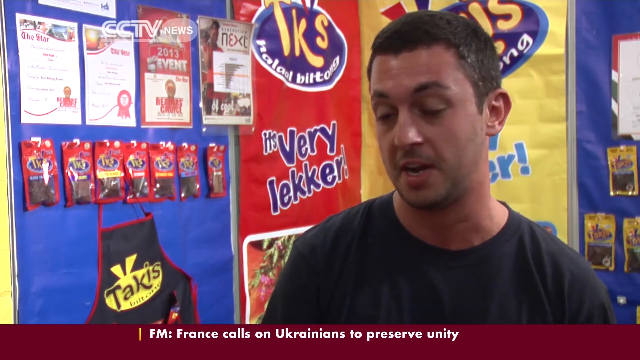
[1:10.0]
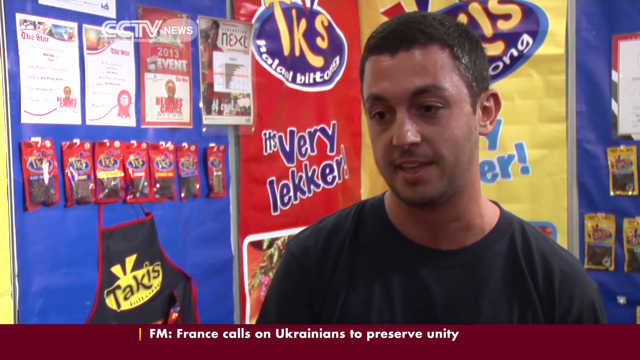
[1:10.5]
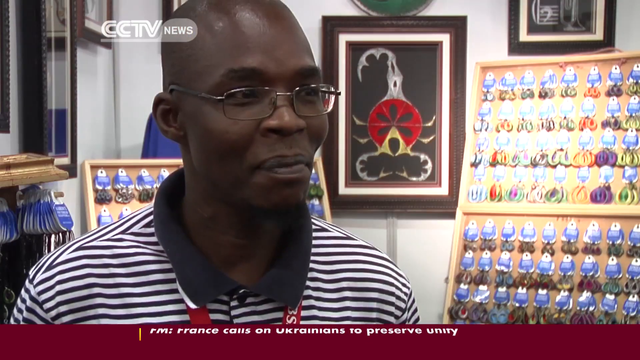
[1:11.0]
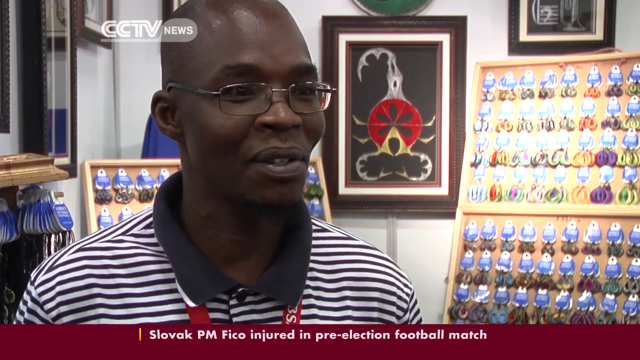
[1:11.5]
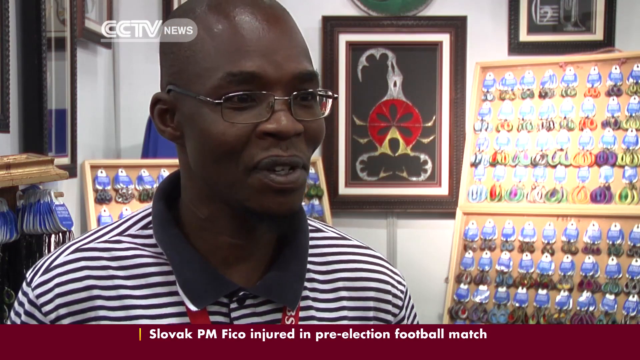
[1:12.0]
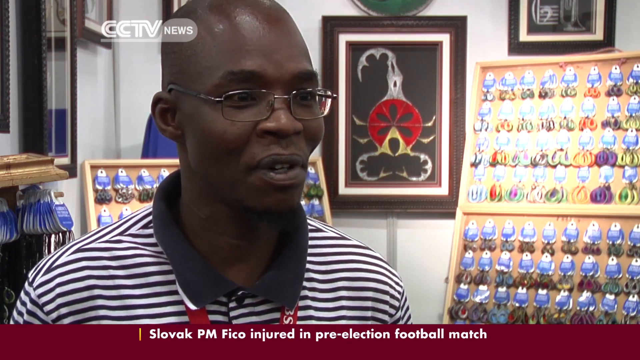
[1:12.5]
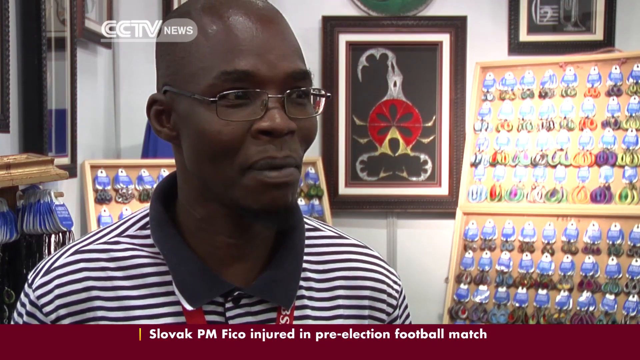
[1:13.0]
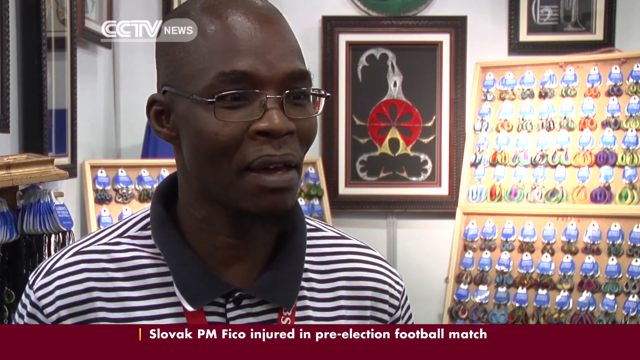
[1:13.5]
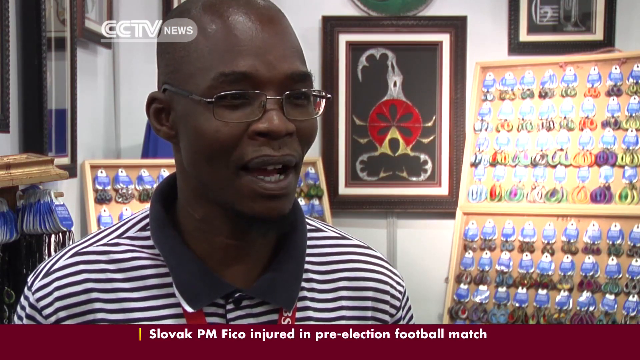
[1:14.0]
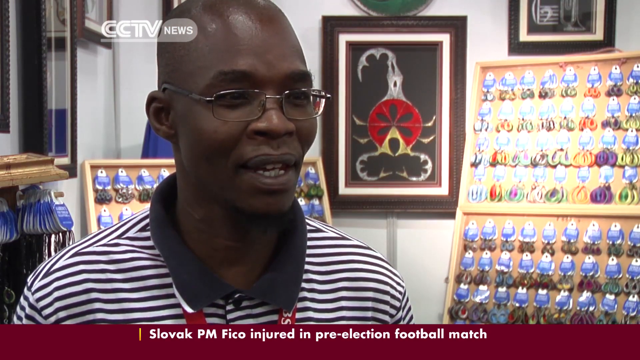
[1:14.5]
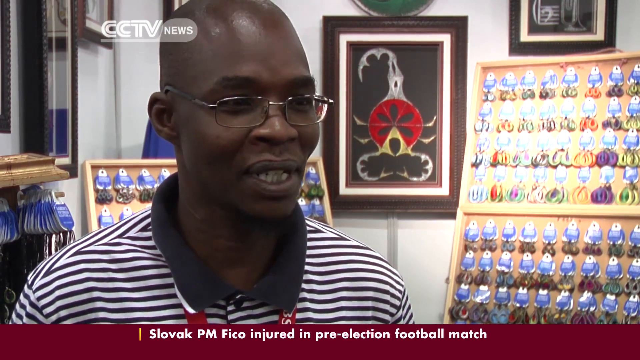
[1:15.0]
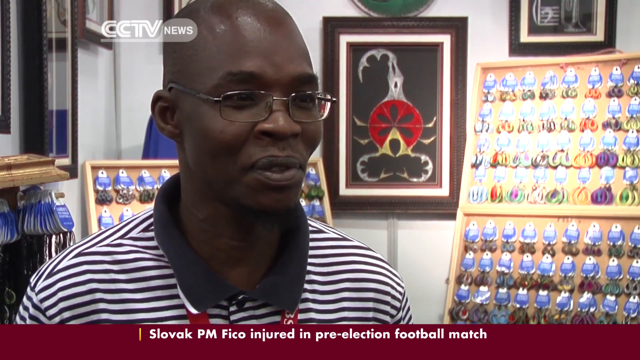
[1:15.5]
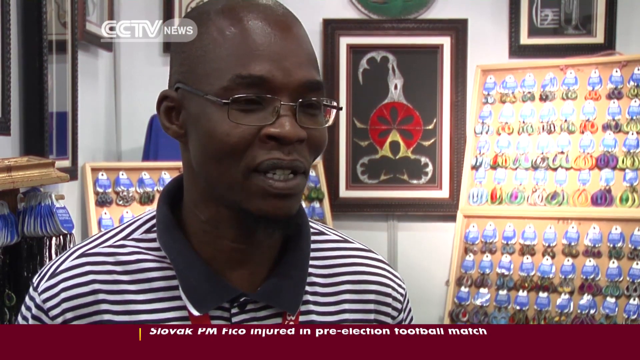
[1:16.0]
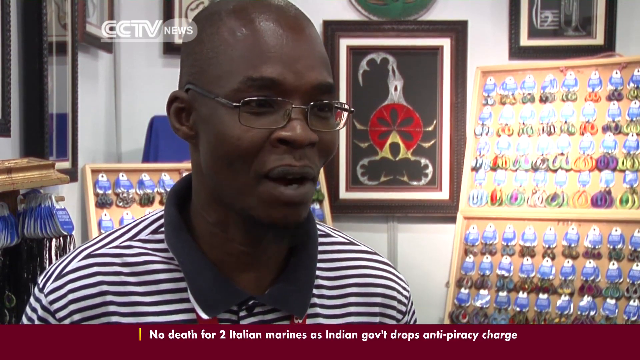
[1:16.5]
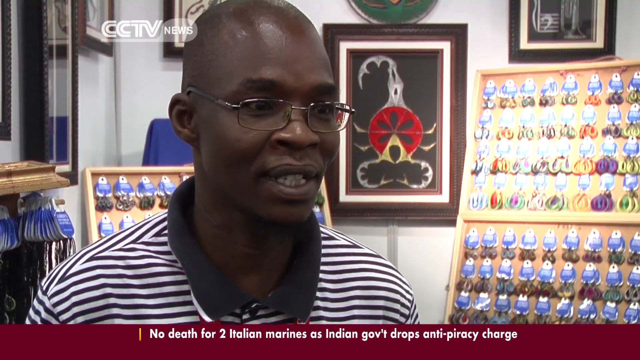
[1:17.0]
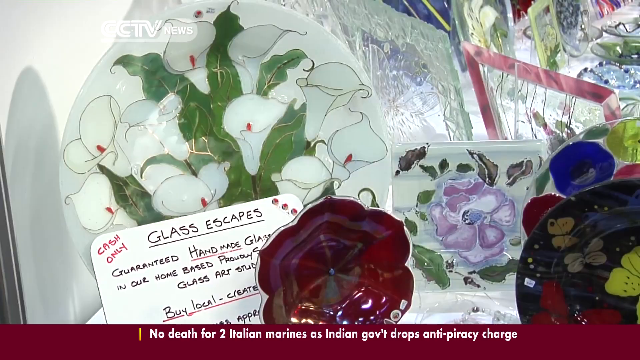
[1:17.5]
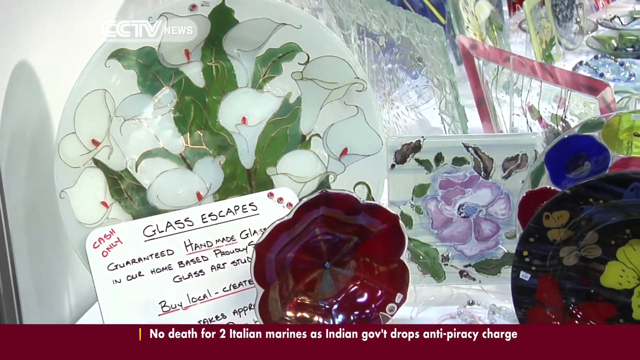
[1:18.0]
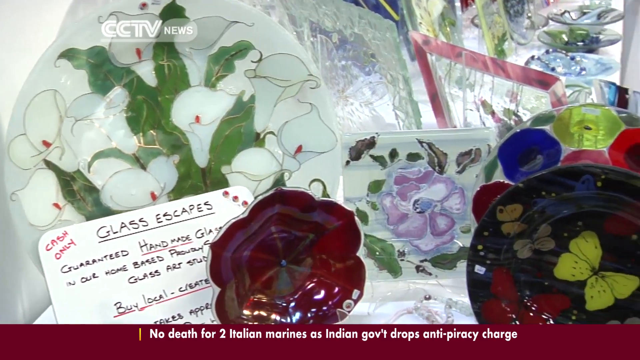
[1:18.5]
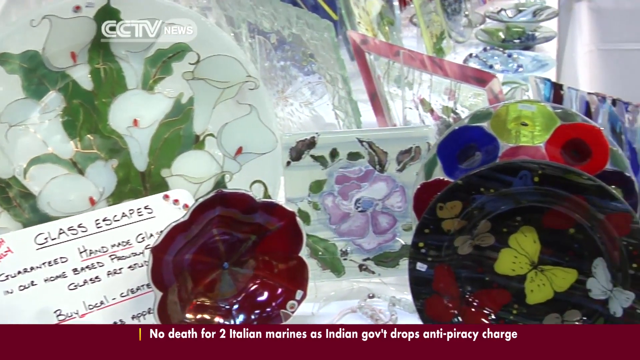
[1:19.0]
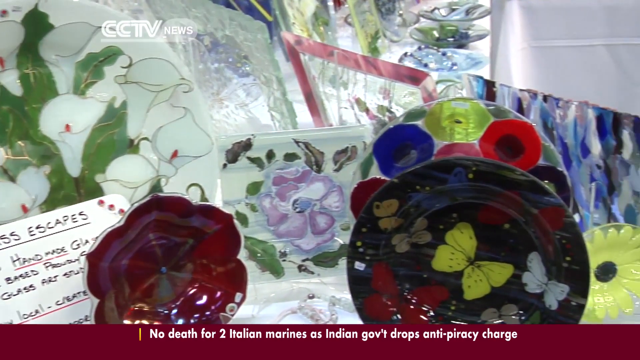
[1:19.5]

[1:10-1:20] Another man, also wearing glasses, appears beside a white and blue structure; it is unclear what he is selling, possibly air fresheners. Glass products are then shown, with text reading "glass escapes cash only." The report is from CCTV News.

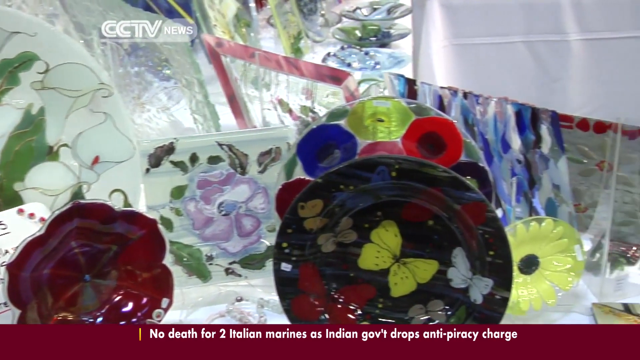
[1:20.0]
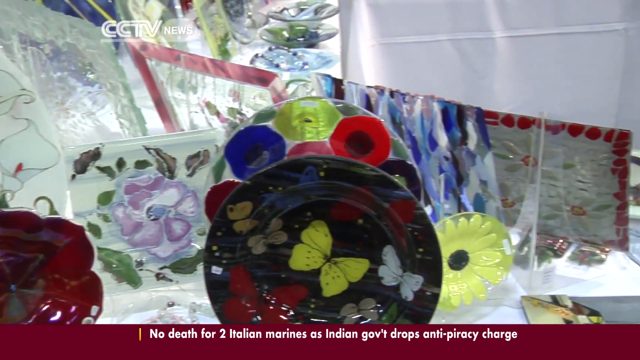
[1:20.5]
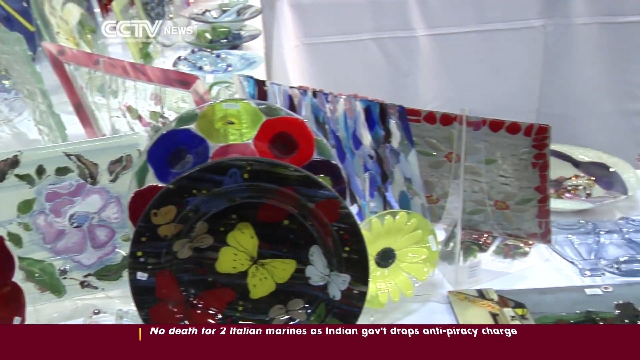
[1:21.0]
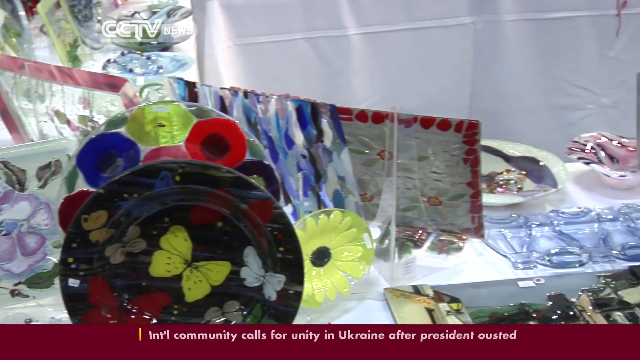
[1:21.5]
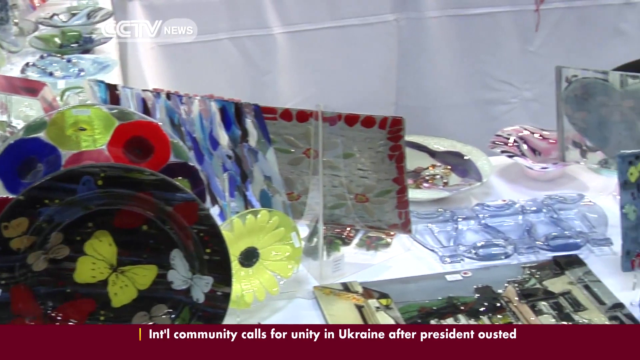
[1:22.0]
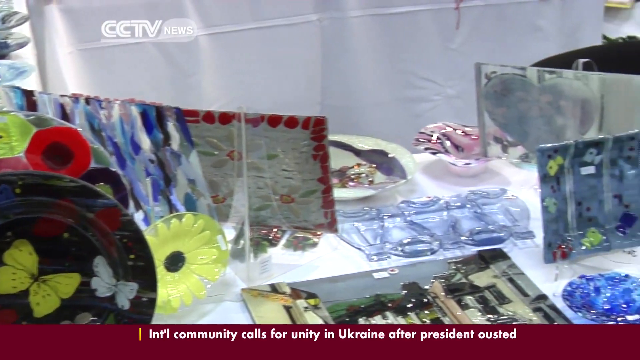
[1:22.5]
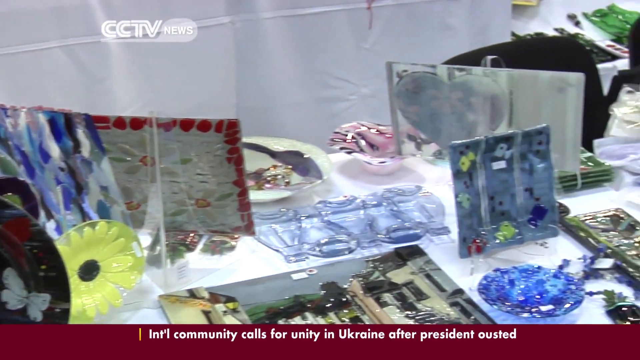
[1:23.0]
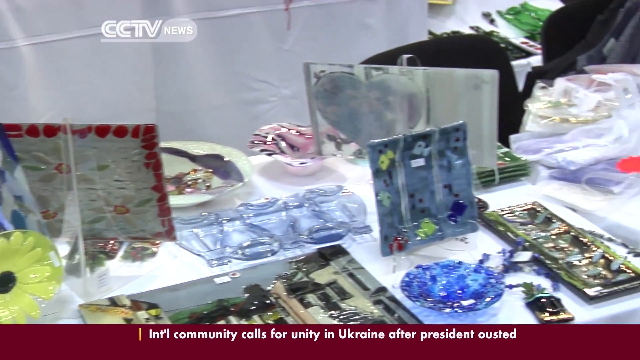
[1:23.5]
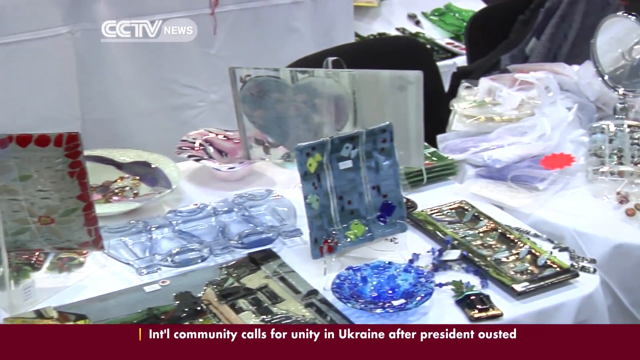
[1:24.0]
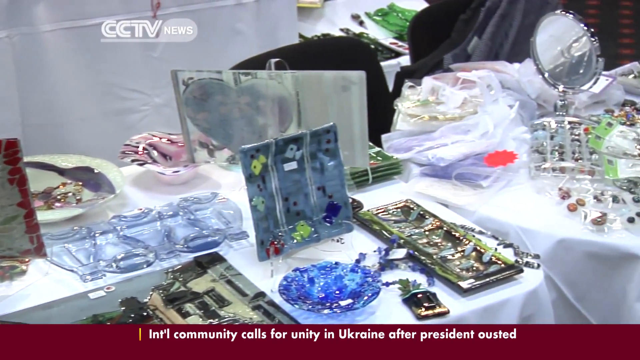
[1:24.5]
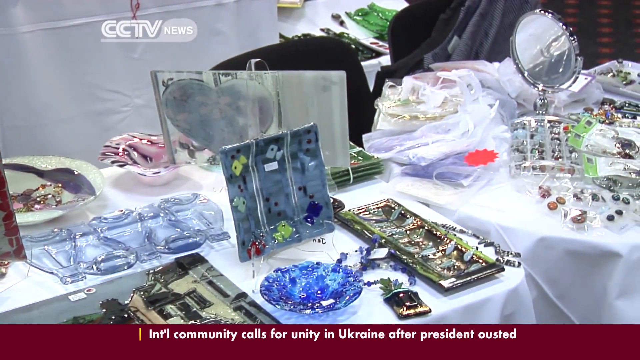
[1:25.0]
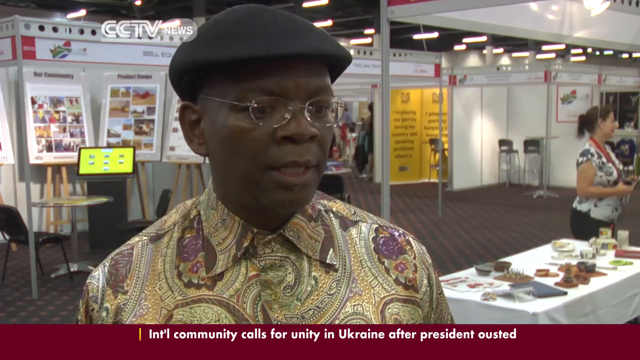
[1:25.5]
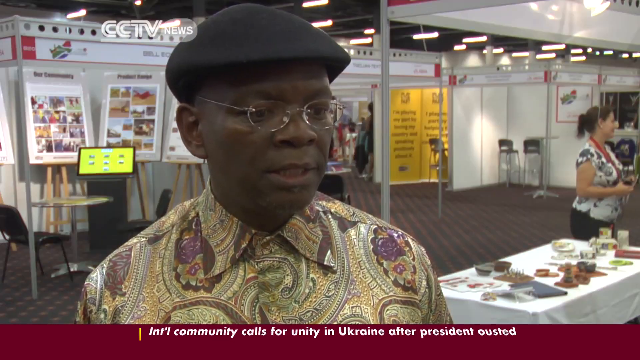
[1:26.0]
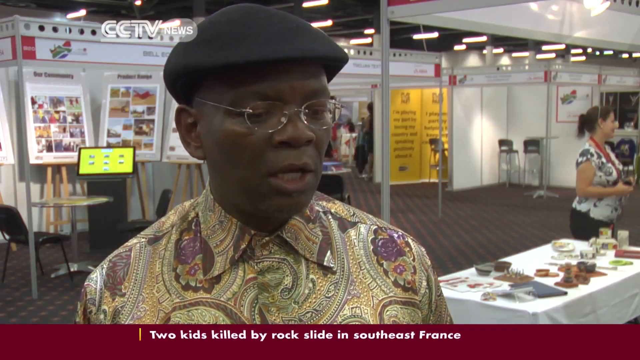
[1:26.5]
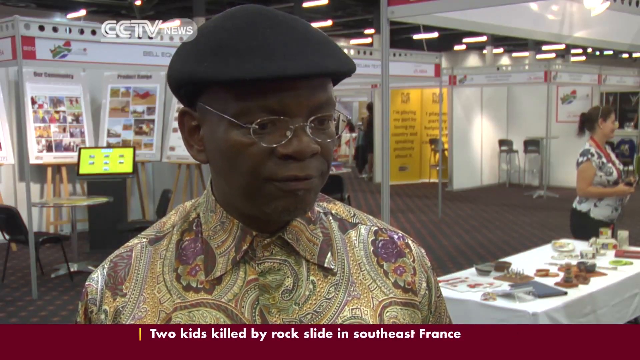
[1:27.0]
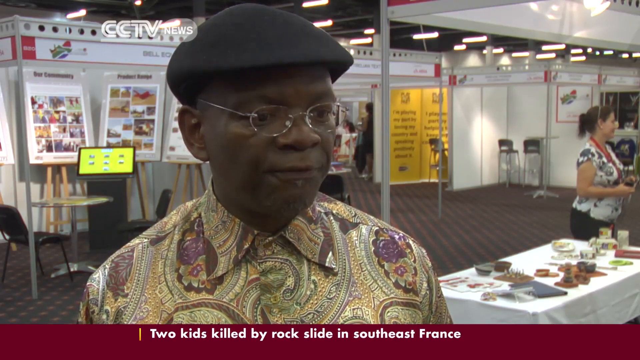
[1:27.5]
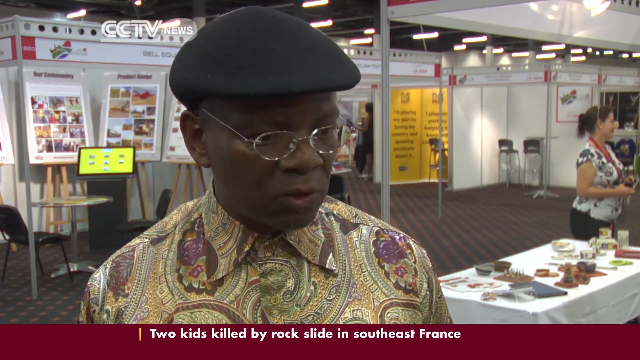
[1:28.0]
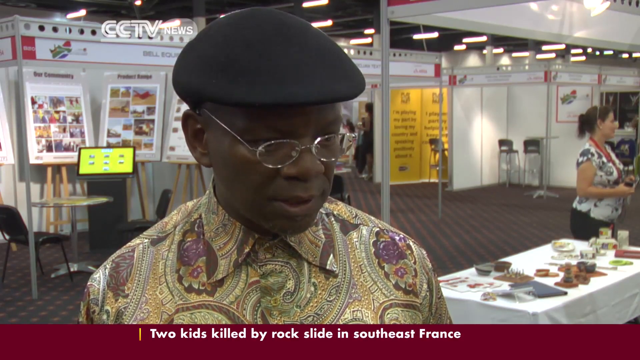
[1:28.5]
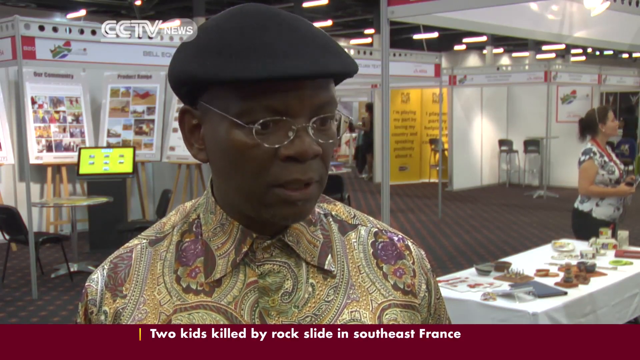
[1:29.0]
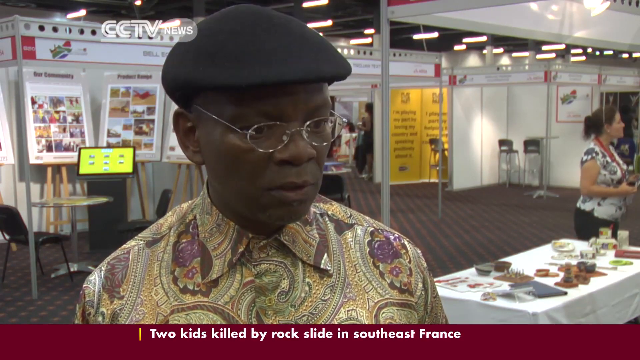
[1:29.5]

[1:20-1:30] Painted glass products in very pretty colors and designs are shown, apparently with something about cash only. The camera moves around, and then an African American man appears wearing a black hat, a nice patterned shirt and glasses. News scrolls along the bottom of the screen.